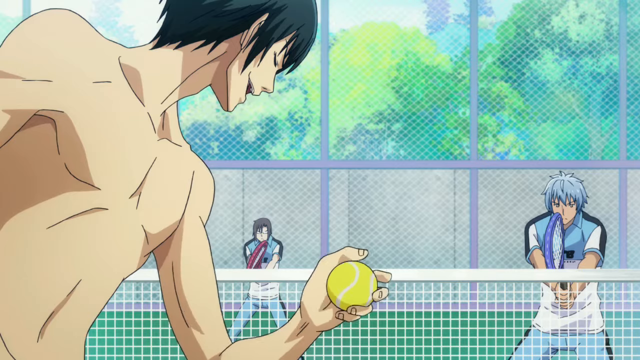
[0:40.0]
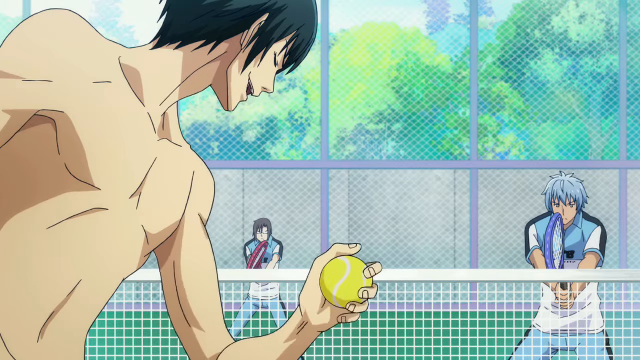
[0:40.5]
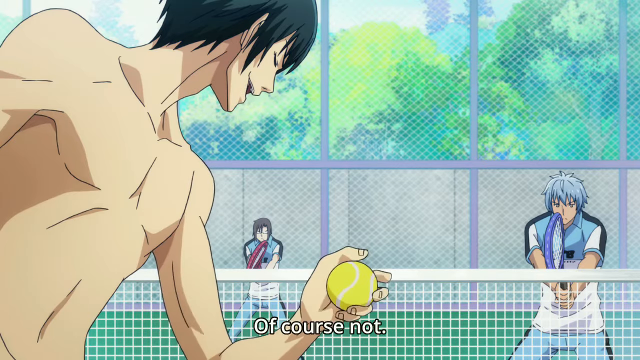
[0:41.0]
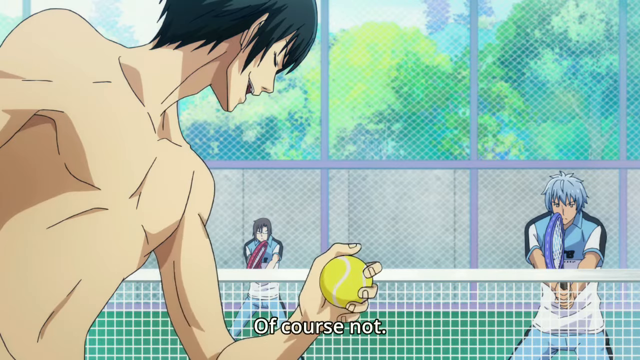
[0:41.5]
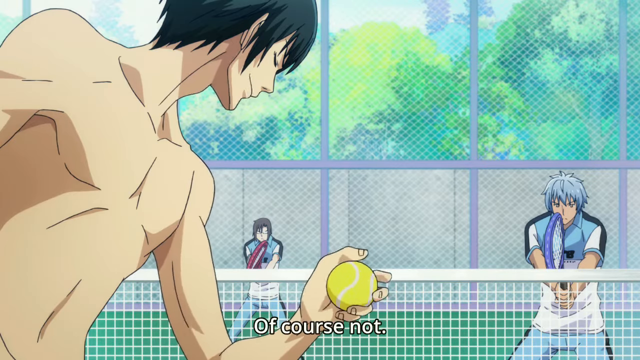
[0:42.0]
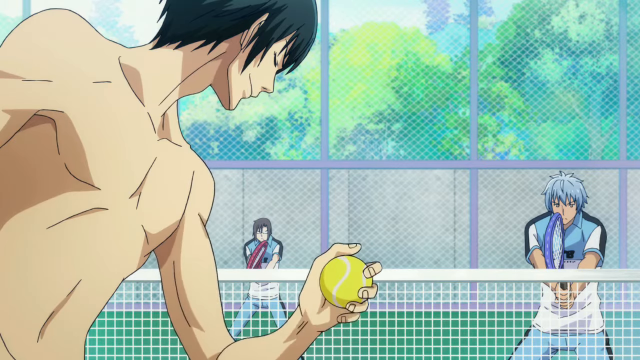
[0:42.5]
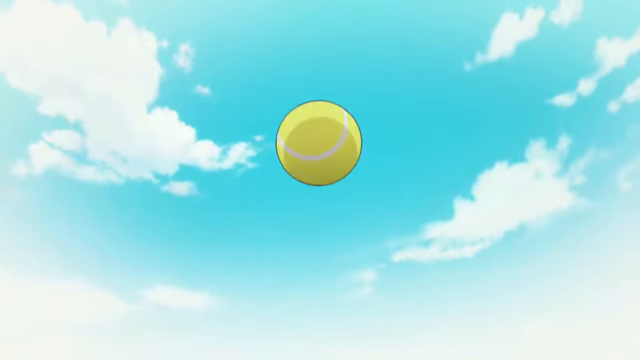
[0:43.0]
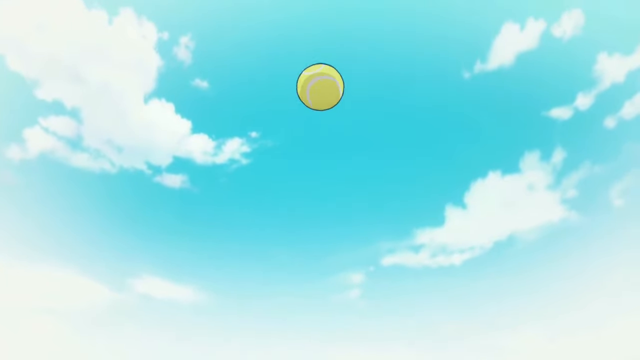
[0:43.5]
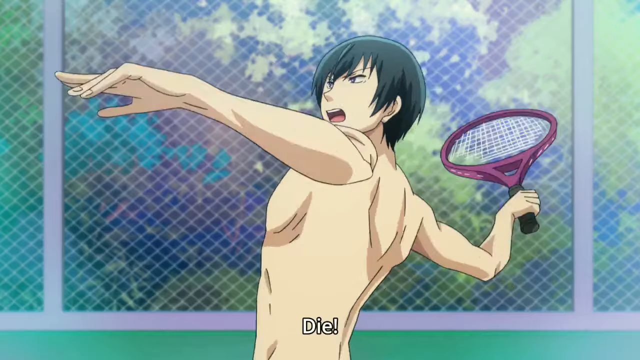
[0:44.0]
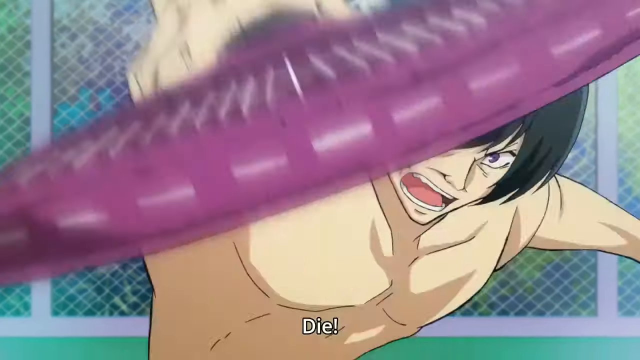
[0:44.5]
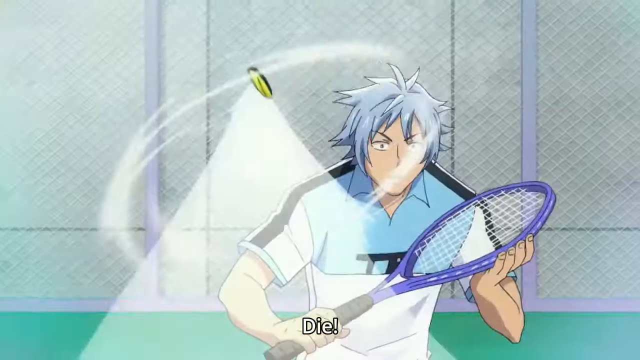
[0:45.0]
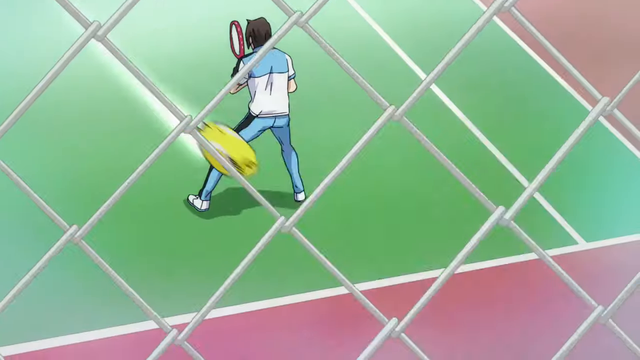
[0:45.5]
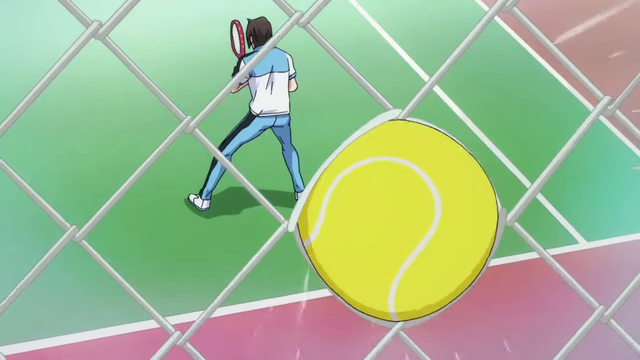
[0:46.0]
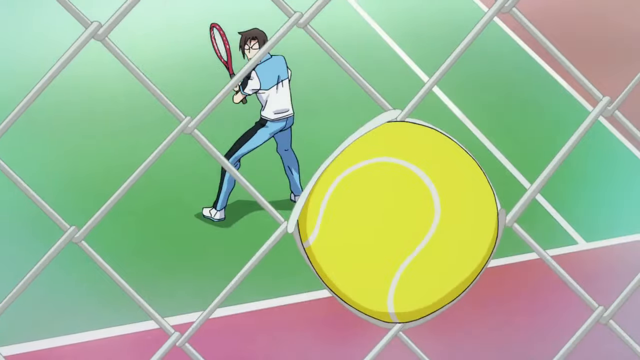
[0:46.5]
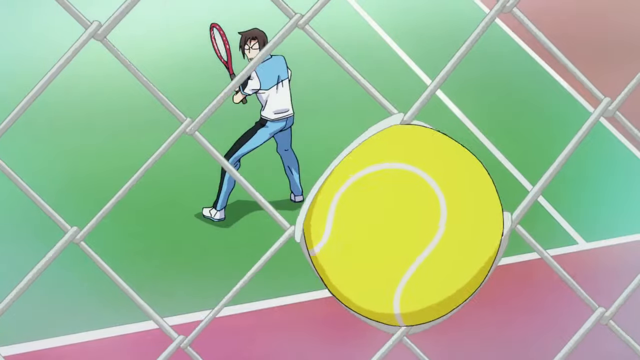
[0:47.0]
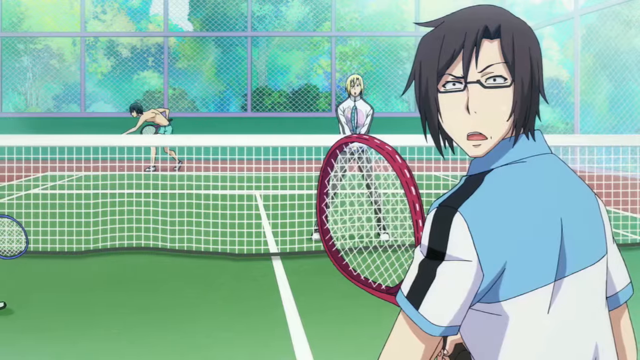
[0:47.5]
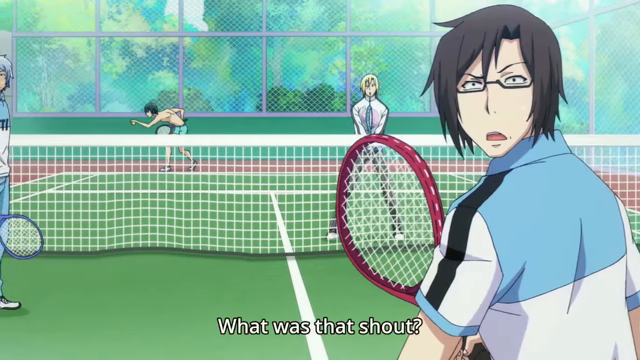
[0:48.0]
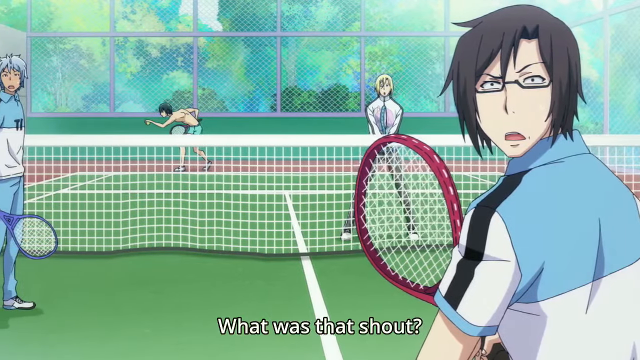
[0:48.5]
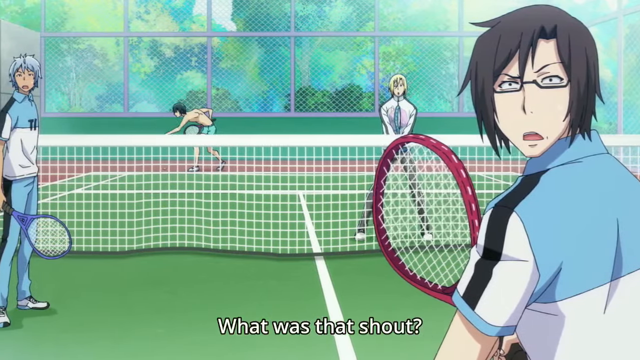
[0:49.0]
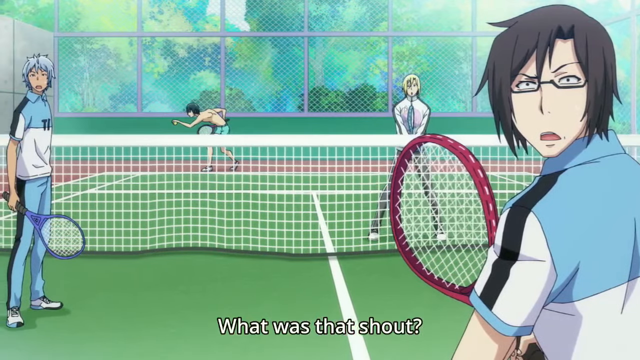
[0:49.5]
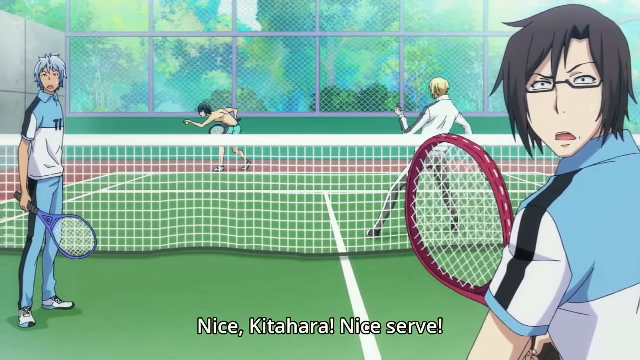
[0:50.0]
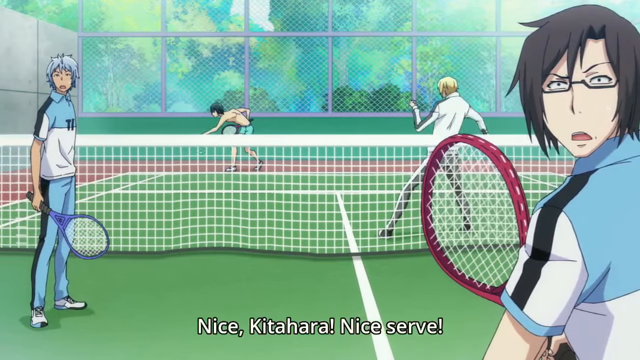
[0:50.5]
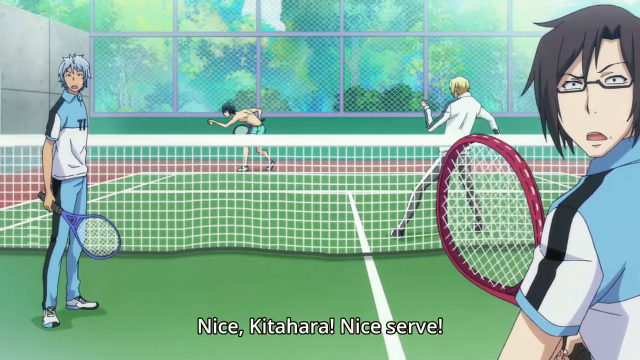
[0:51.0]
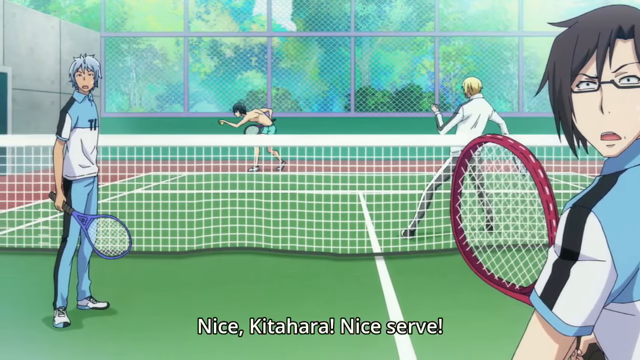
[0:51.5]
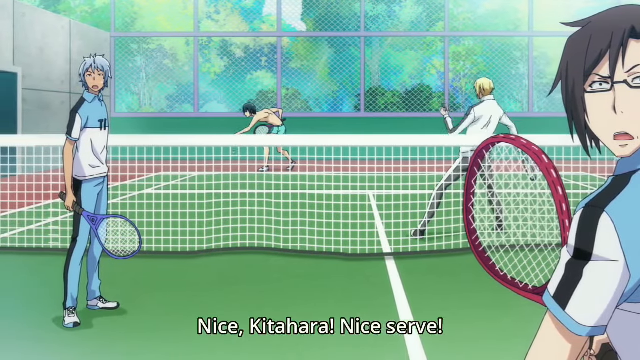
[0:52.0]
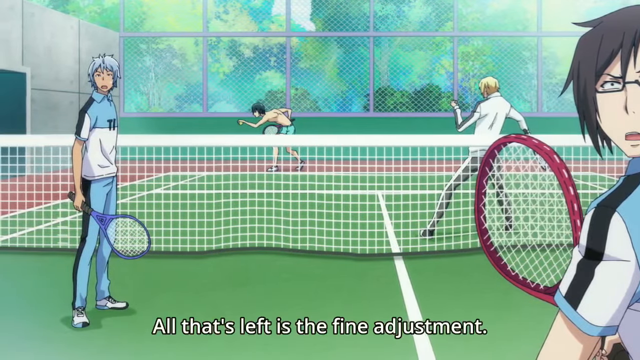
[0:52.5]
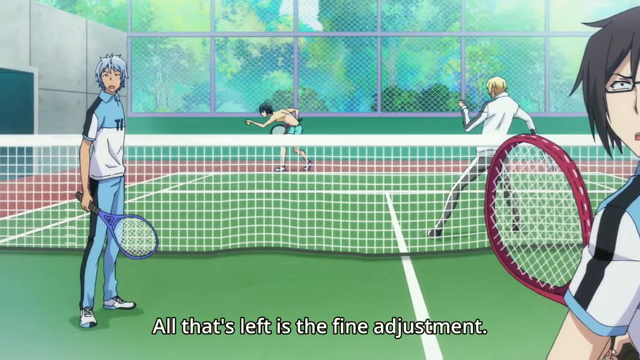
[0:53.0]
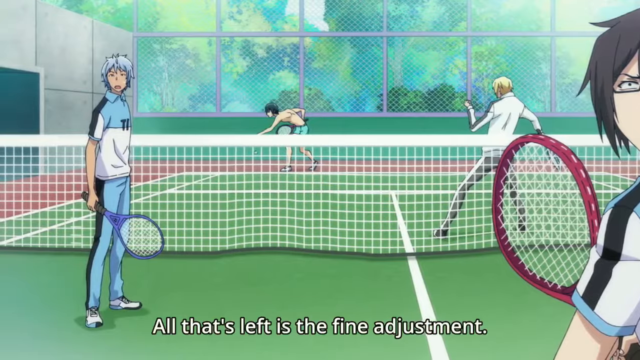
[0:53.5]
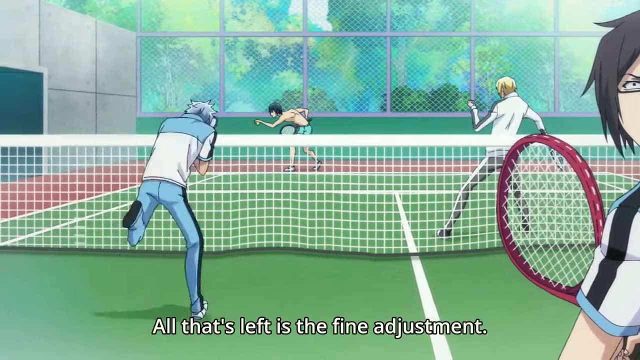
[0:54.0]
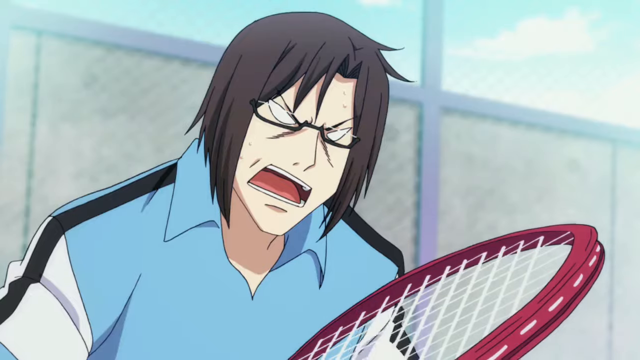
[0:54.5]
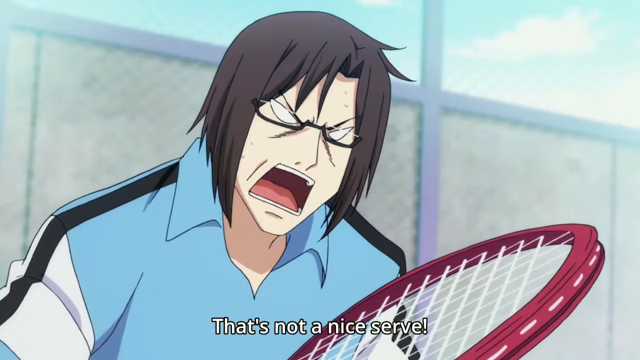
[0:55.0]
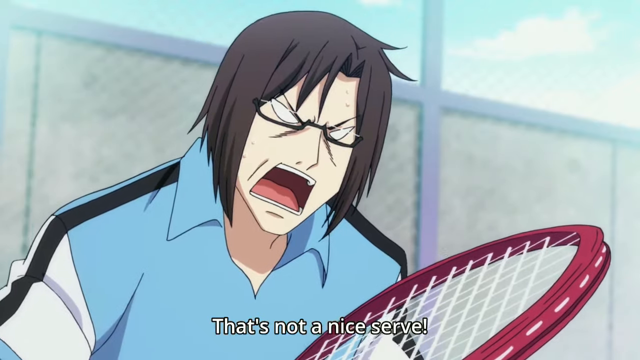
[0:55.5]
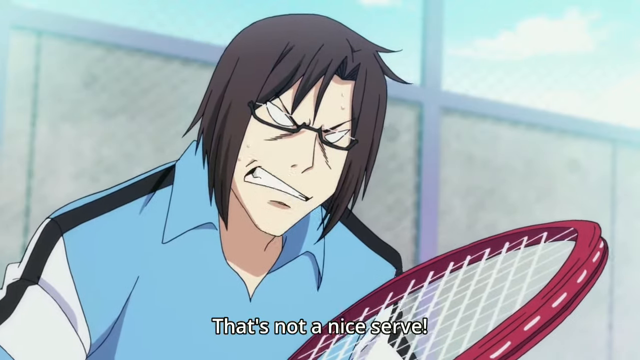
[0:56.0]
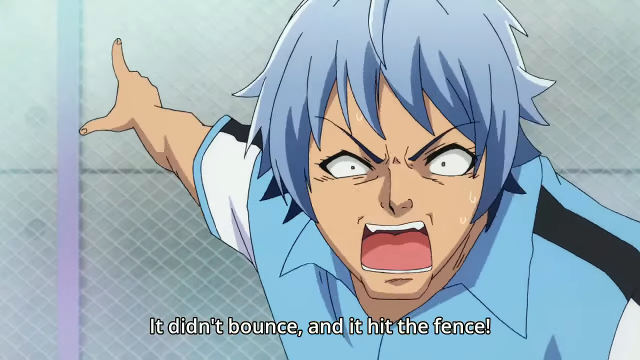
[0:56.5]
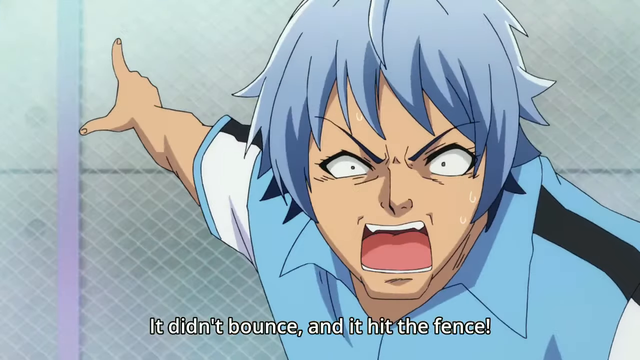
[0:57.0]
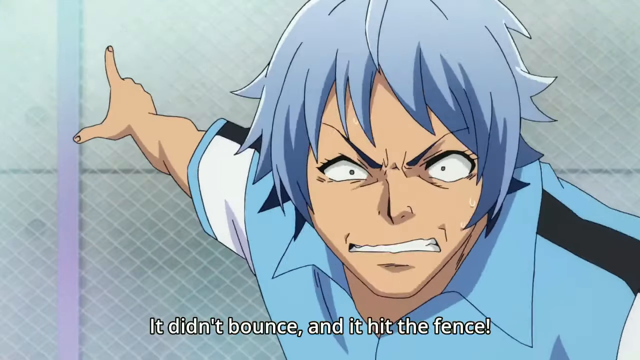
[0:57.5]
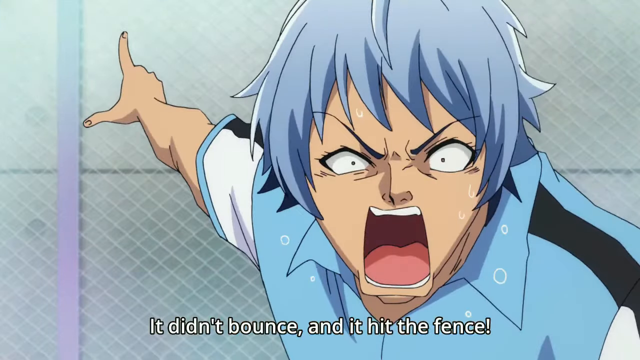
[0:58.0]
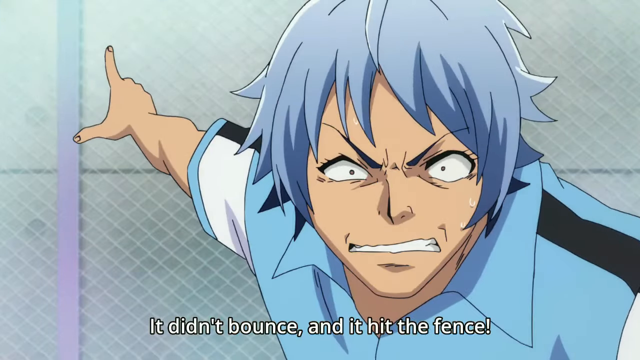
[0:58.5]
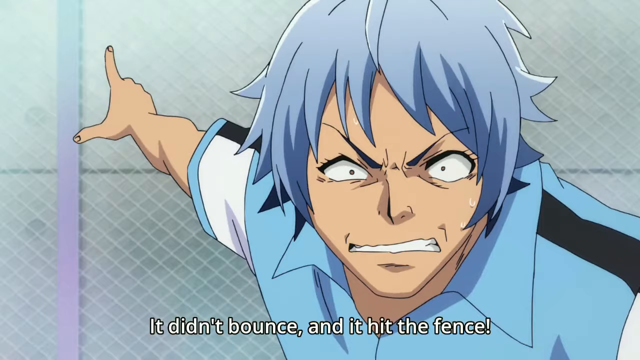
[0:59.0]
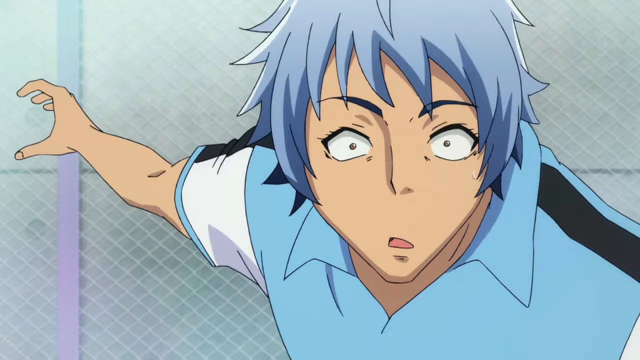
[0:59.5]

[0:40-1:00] The animation shows two teams of two playing tennis. In the foreground is a man with short black hair who wears no top and holds the yellow tennis ball in his left hand. In front of him the other team waits for him to serve, holding their tennis rackets in front of them. They wear blue and white tops; one has short brown hair and the other has short blue hair. Words come up on the screen as the characters talk to one another, the first being "of course not." The ball is thrown up into the sky and the shirtless man serves it really fast at the other team; as he says the word "die," he hits the ball so hard that it misses the other players and becomes embedded in a chain link fence behind them. The other player on his team says "nice Kitahara, nice serve." He starts to bounce the ball in his other hand as he goes to serve another ball. A player on the other team is really angry and shouts "that's not a nice serve" at him. Their mouth becomes square, almost oblong, and they say "it didn't bounce, it hit the fence."